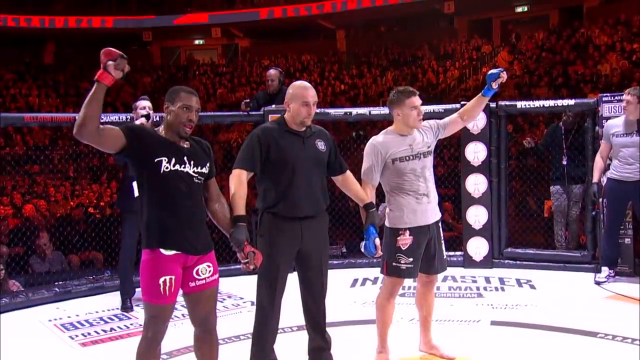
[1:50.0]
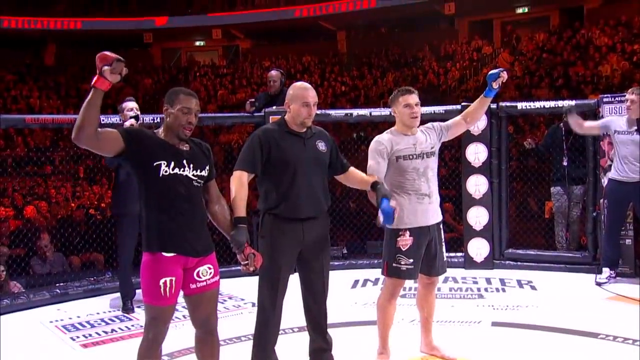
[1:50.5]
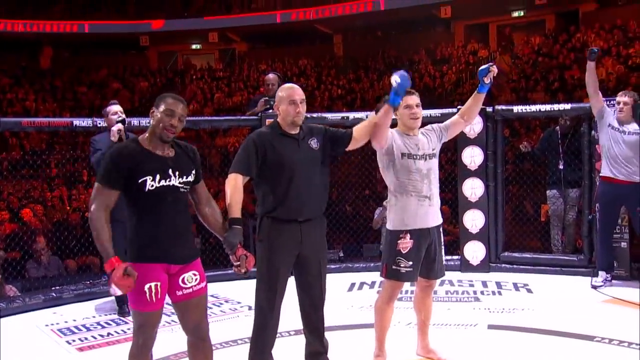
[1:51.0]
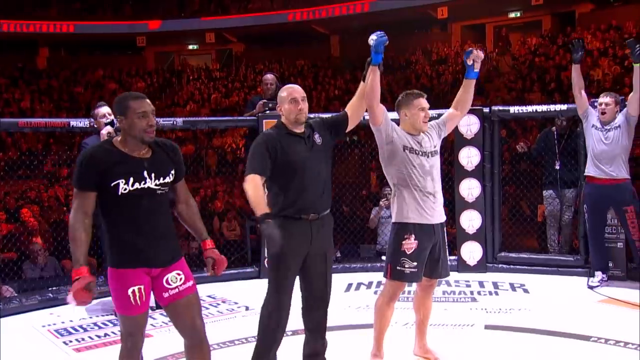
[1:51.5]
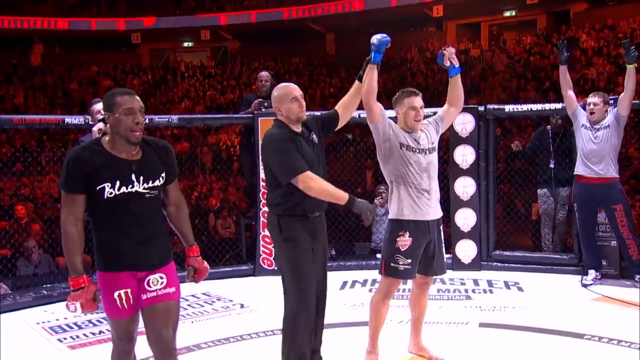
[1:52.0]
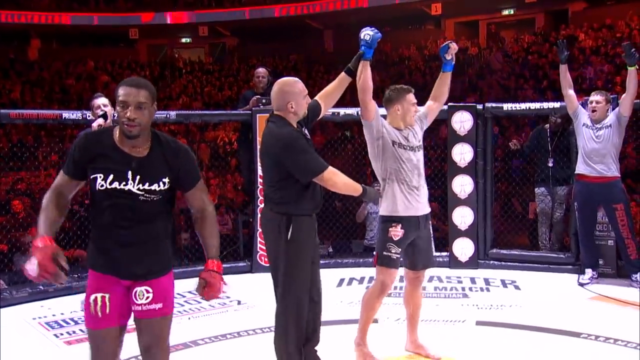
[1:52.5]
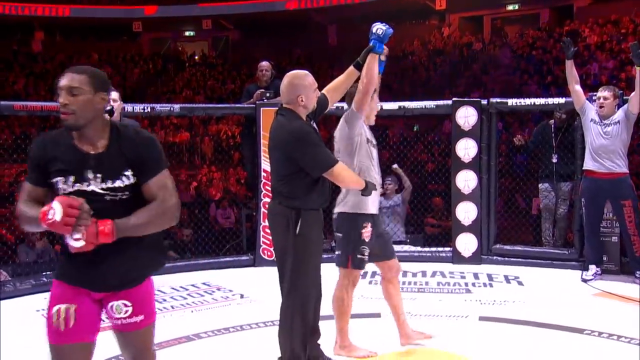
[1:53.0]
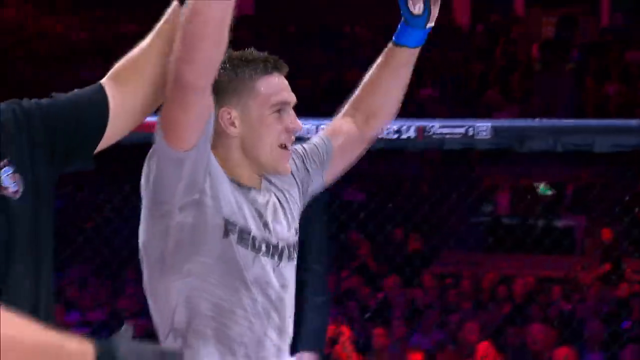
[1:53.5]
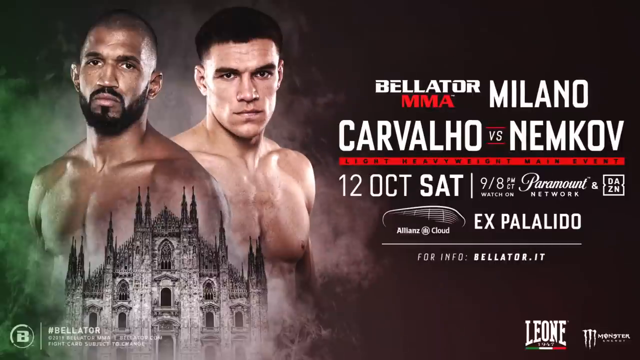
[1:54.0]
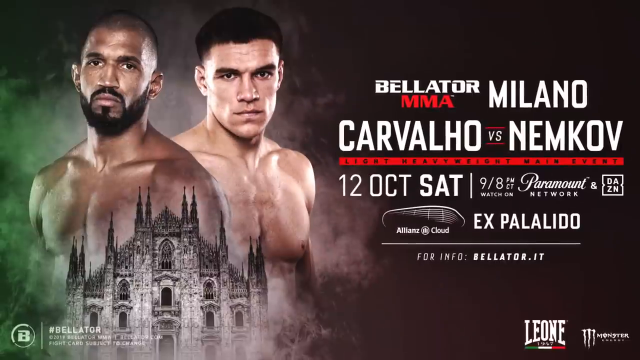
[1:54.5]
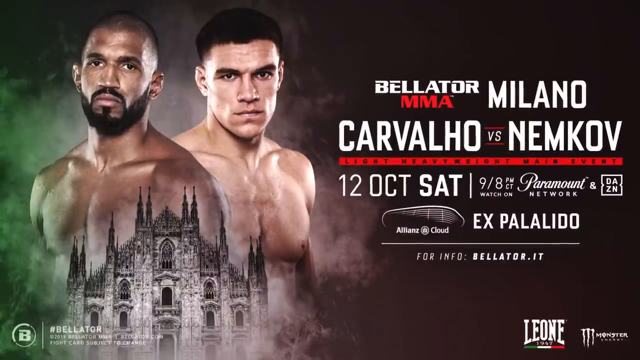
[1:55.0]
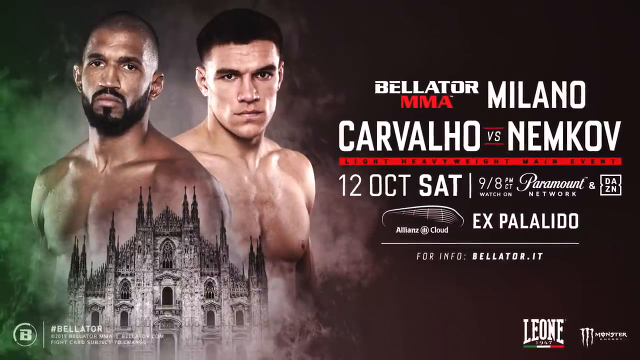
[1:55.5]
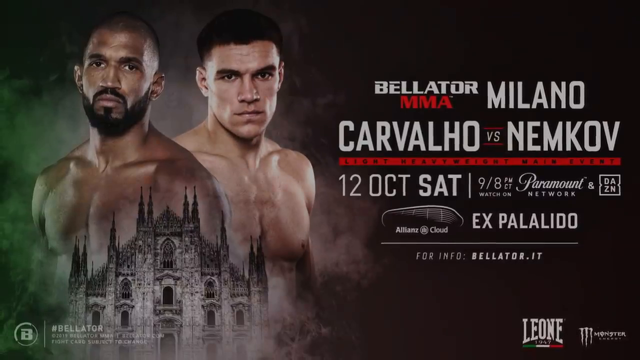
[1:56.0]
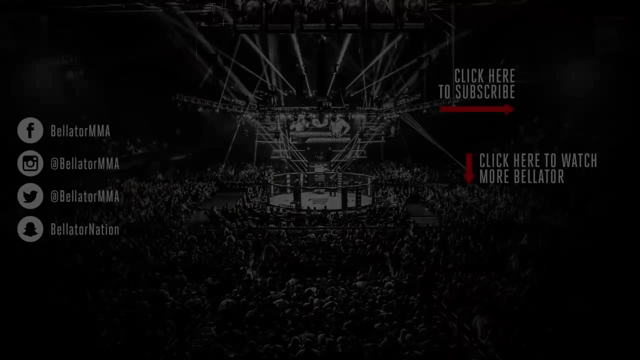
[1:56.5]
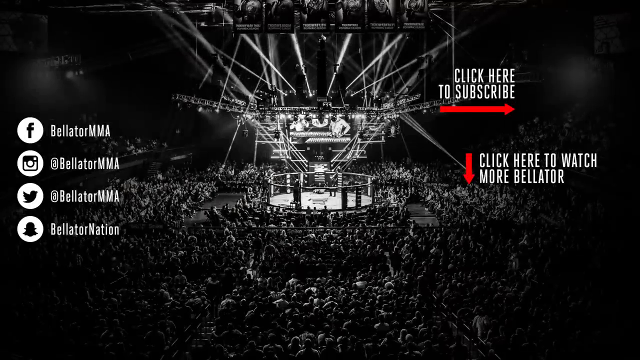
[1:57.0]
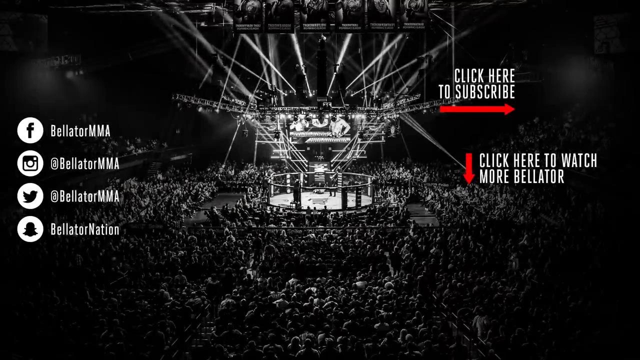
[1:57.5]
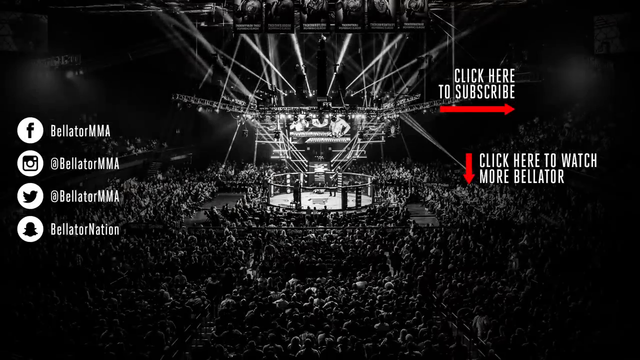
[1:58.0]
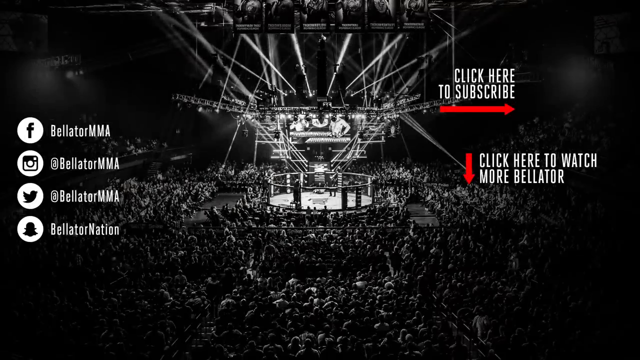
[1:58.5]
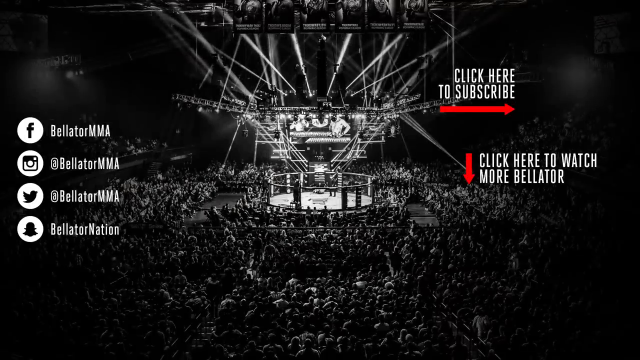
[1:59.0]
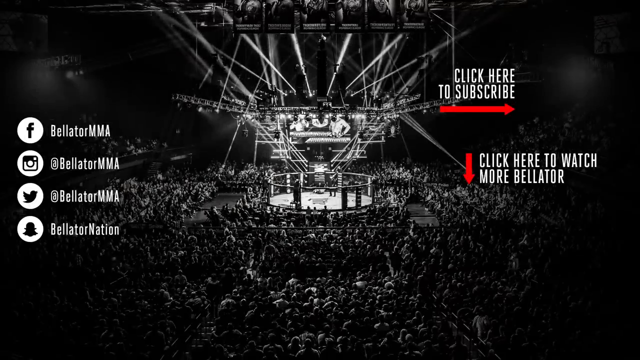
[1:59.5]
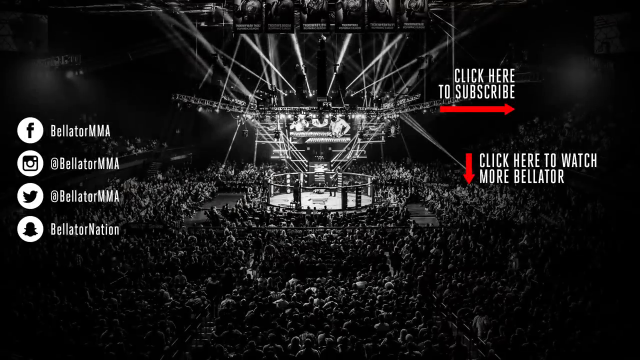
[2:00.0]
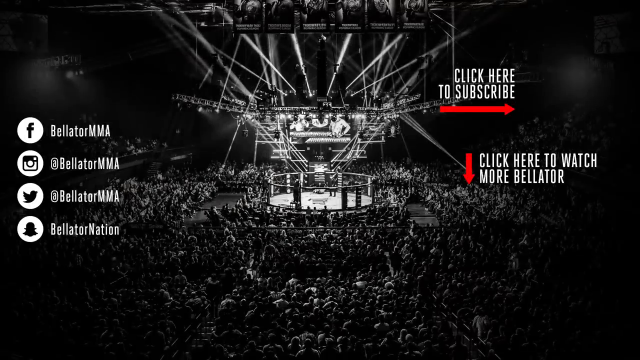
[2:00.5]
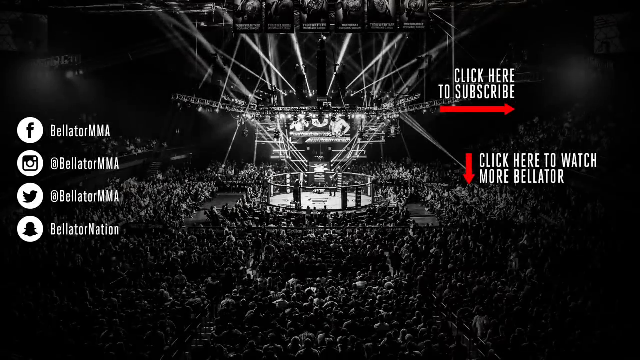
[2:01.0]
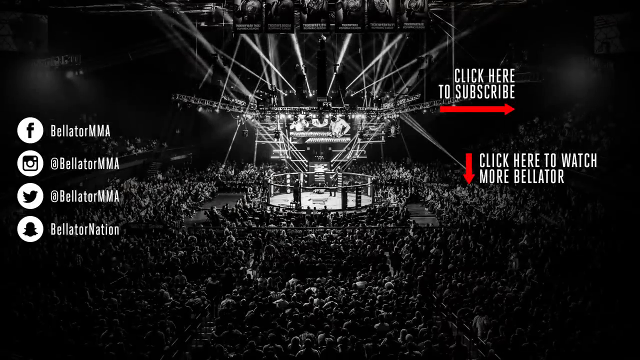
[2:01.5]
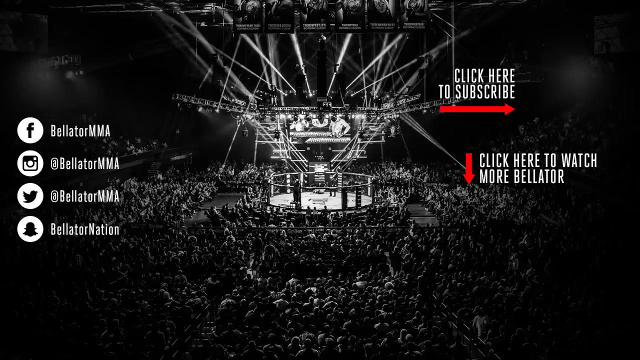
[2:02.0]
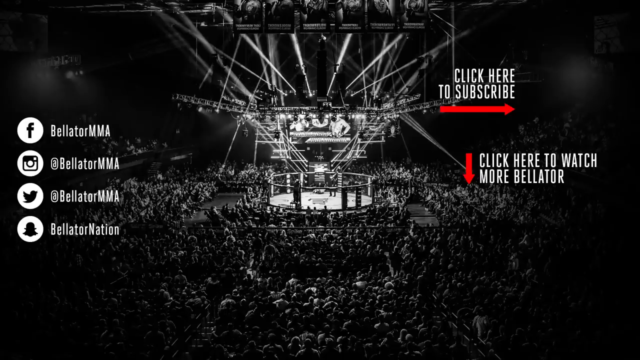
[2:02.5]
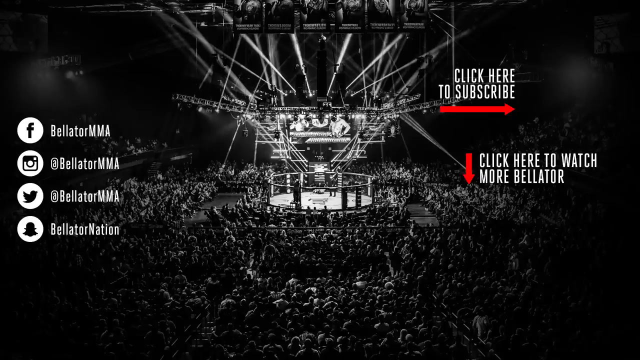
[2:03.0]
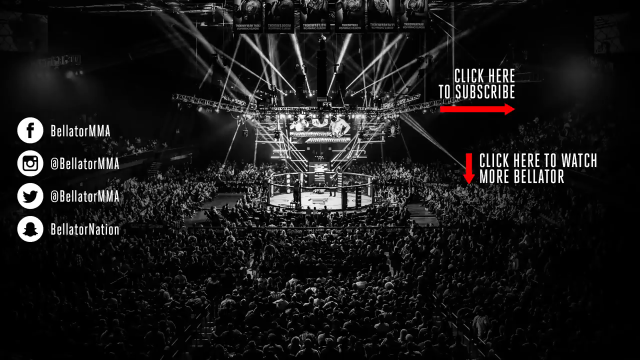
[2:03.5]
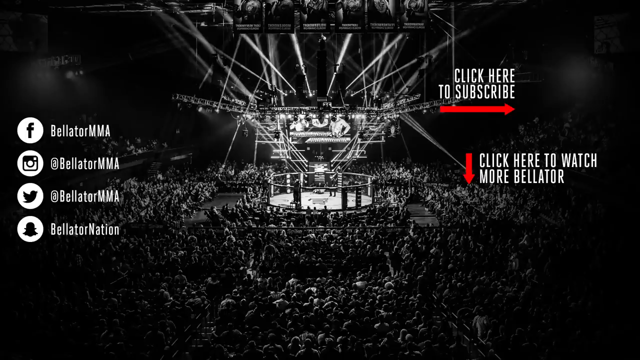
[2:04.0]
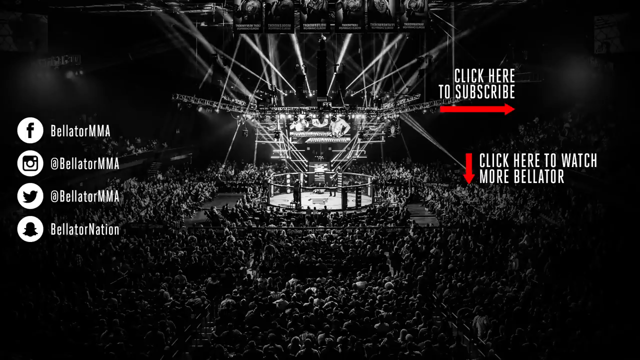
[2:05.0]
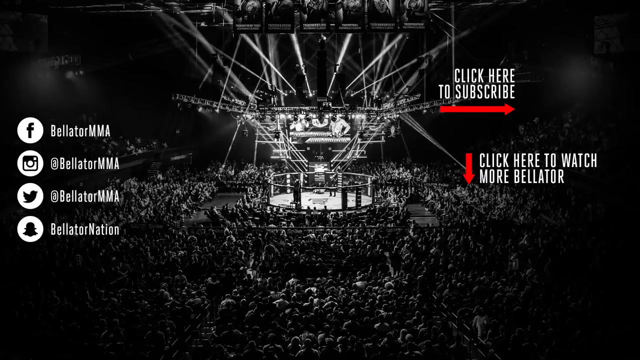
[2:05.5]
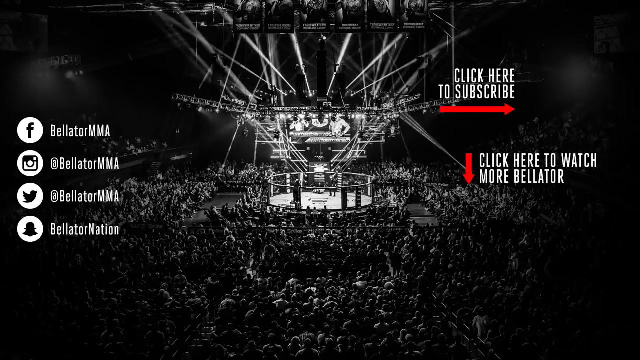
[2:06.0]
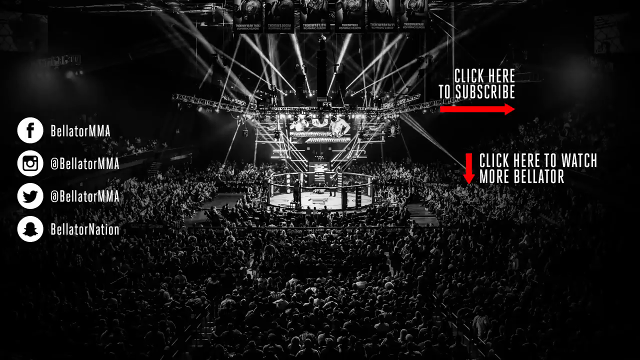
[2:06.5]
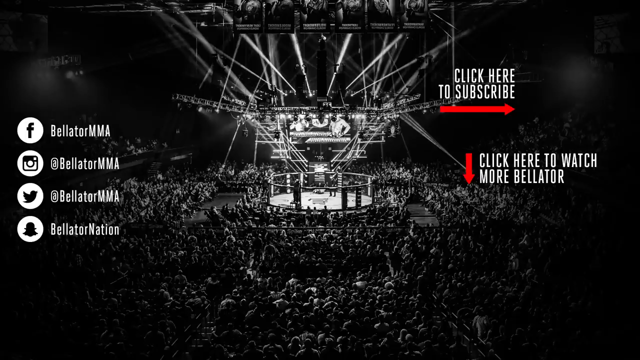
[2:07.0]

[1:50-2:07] The referee raises Nemkov's arm. The video cuts to a splash screen showing the next set of fights, apparently Charalvalo versus Nemkov. Another splash screen follows with Bellator MMA, a number of social media links, click to subscribe and click to watch more, with a small element in the bottom right corner that says "subscribe."